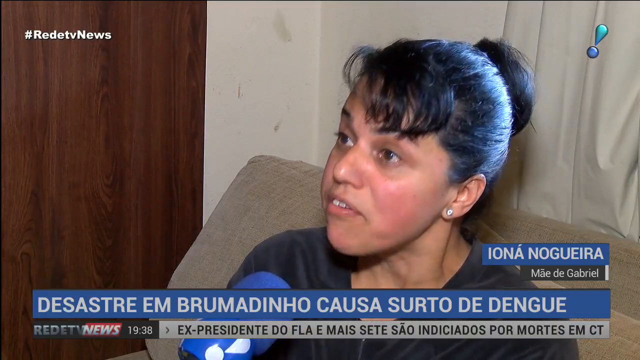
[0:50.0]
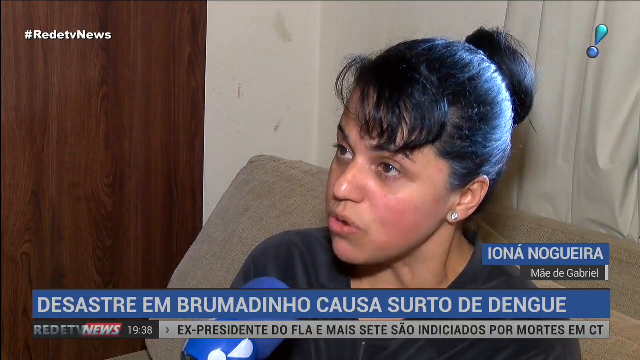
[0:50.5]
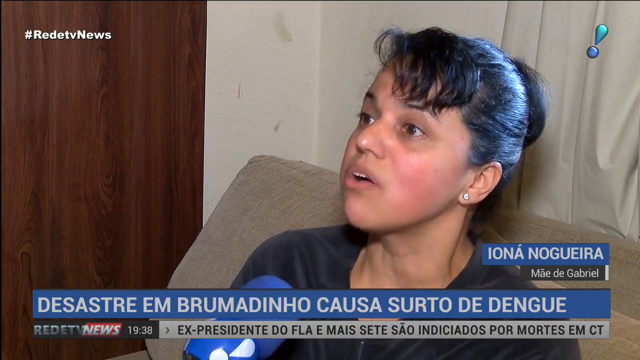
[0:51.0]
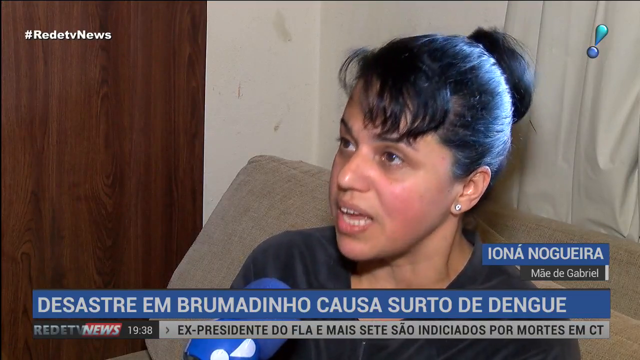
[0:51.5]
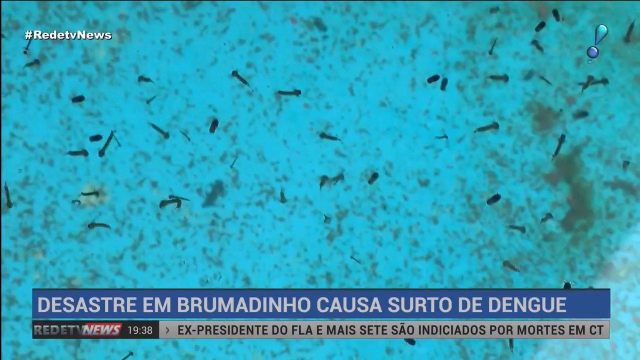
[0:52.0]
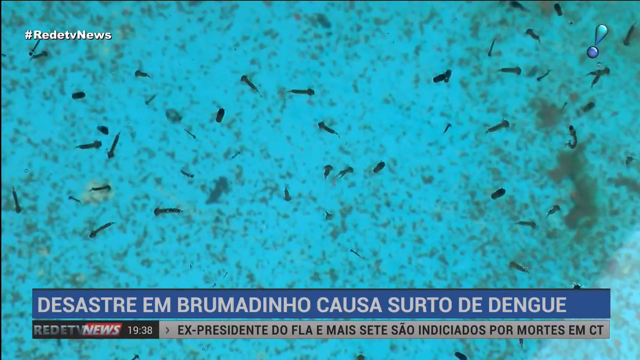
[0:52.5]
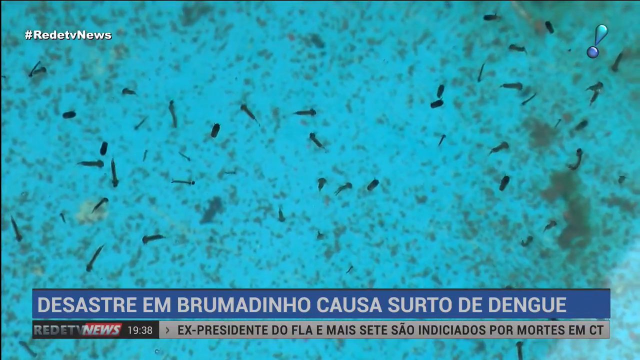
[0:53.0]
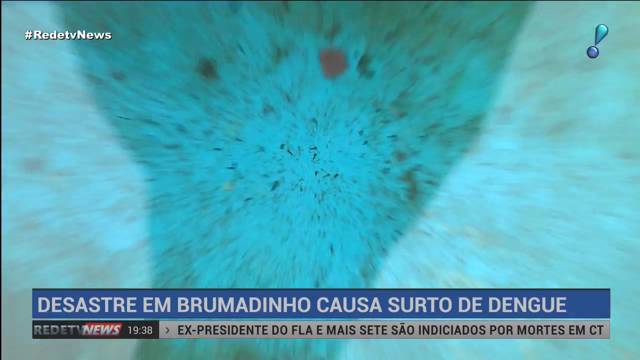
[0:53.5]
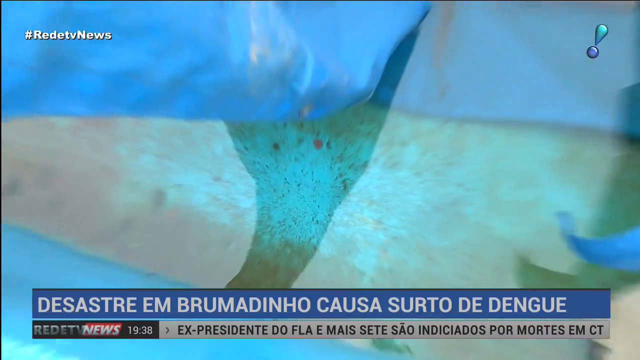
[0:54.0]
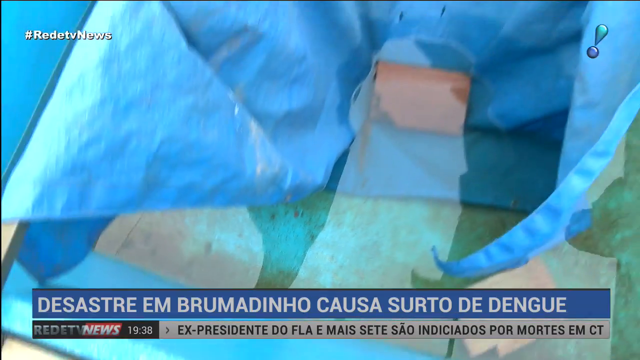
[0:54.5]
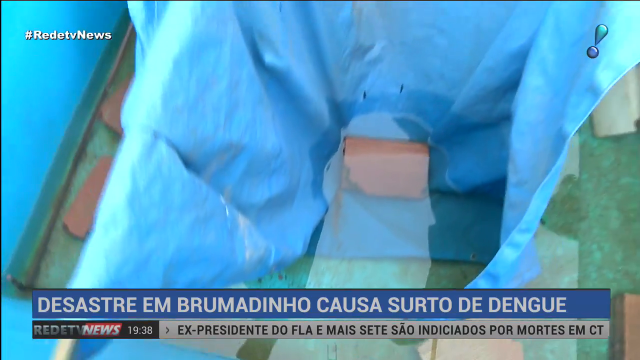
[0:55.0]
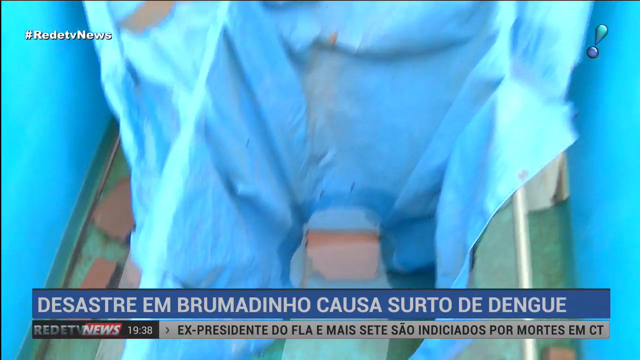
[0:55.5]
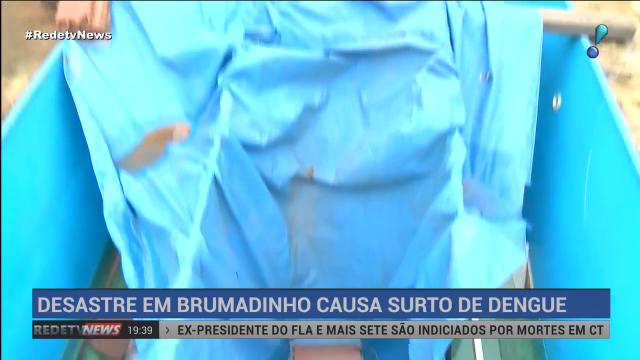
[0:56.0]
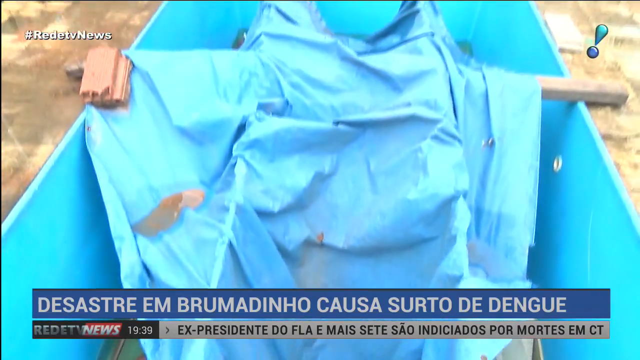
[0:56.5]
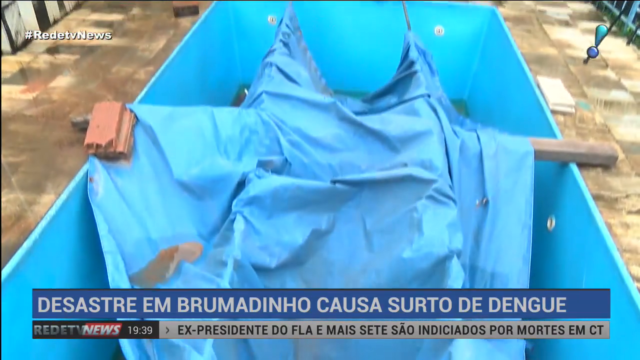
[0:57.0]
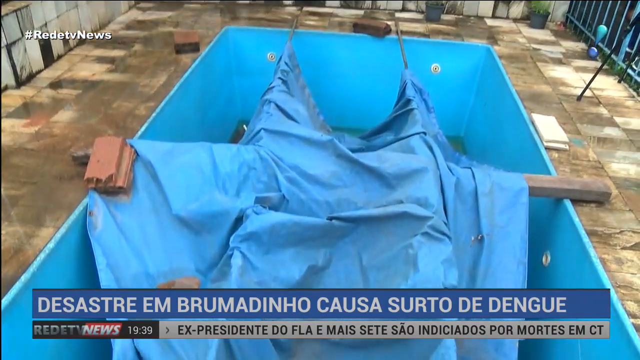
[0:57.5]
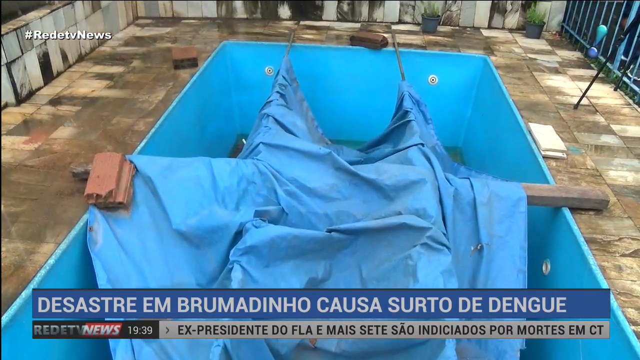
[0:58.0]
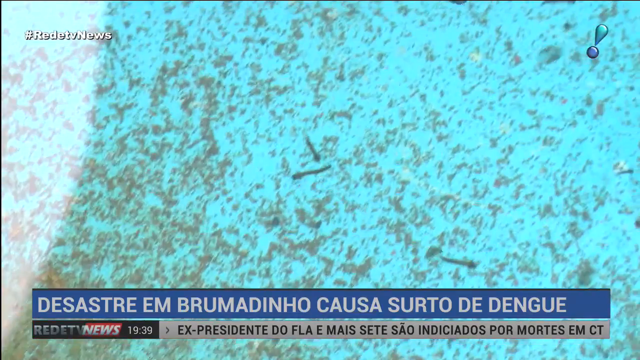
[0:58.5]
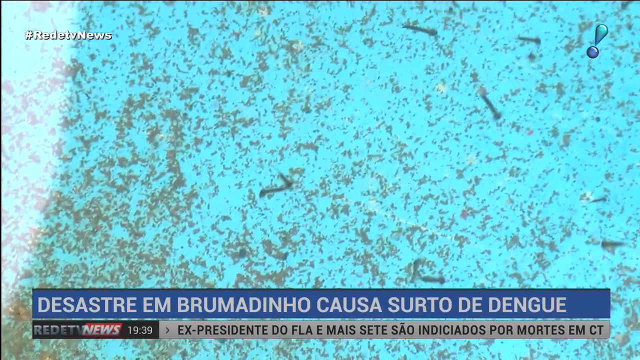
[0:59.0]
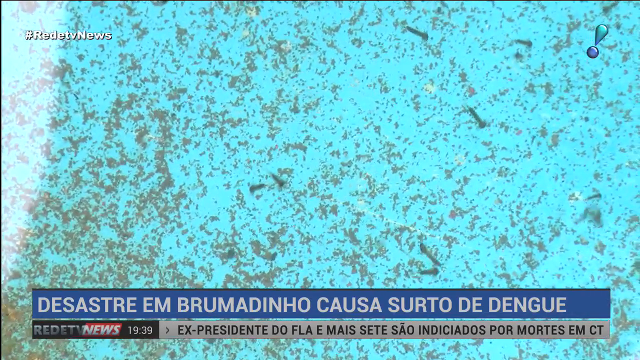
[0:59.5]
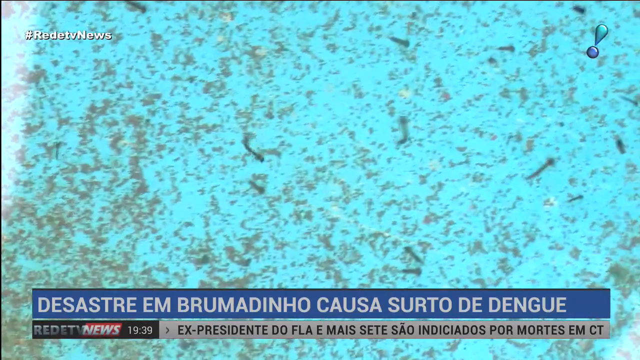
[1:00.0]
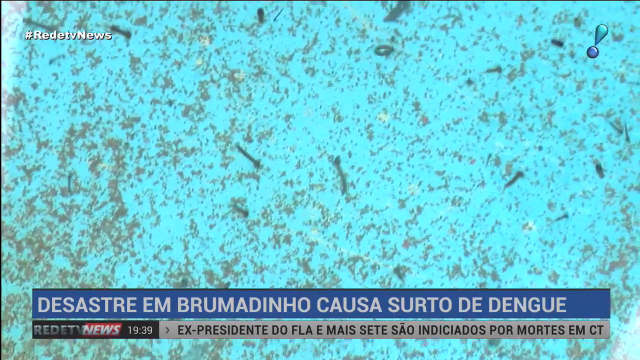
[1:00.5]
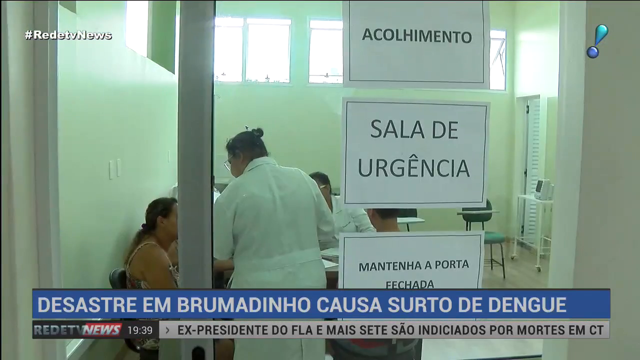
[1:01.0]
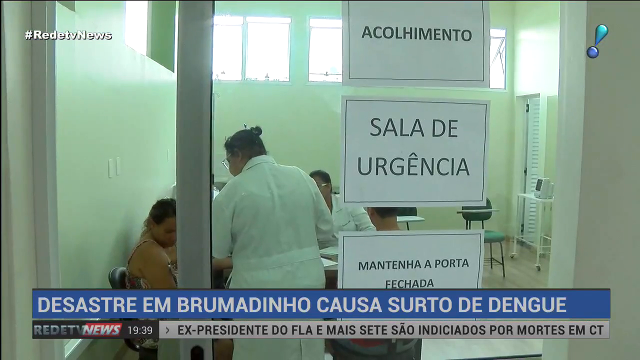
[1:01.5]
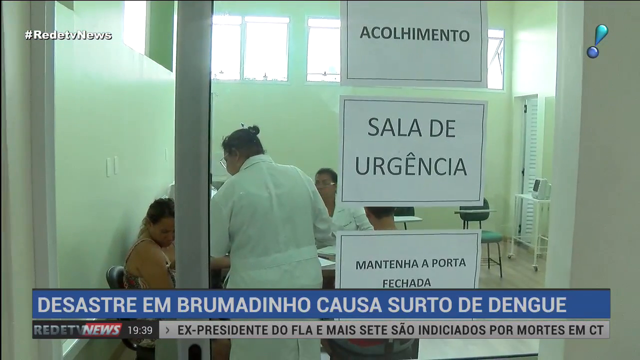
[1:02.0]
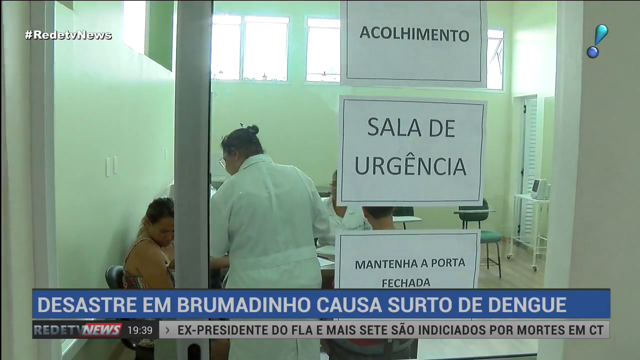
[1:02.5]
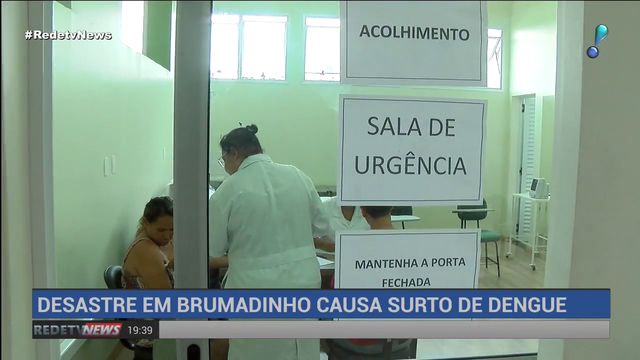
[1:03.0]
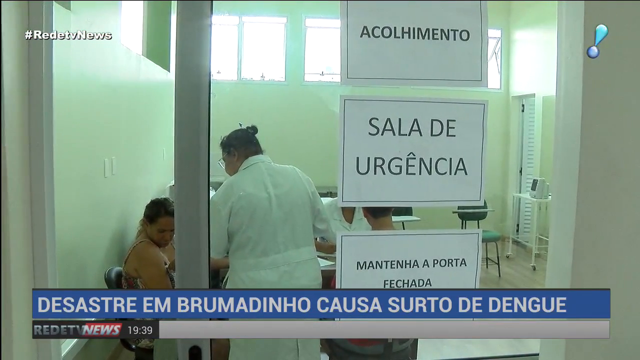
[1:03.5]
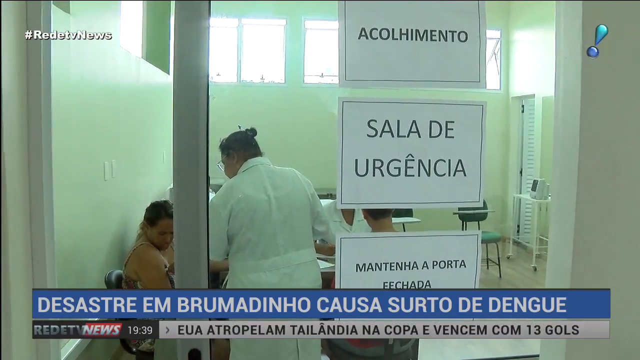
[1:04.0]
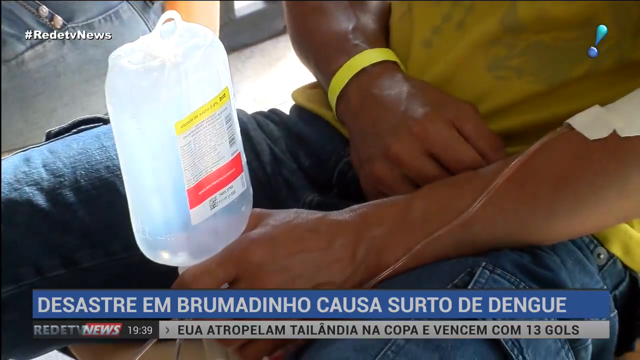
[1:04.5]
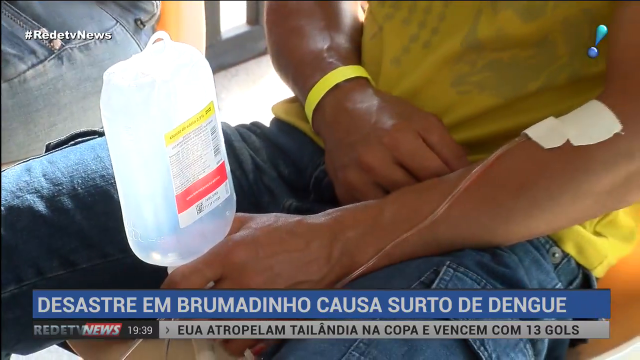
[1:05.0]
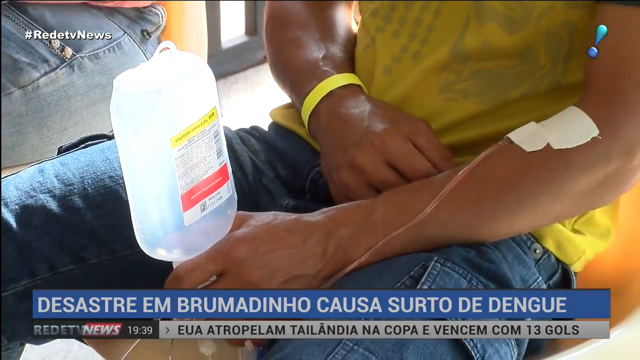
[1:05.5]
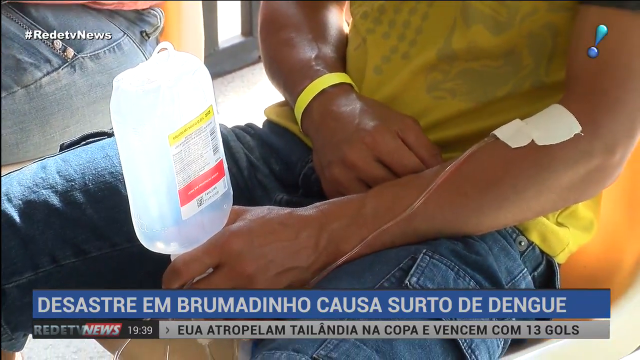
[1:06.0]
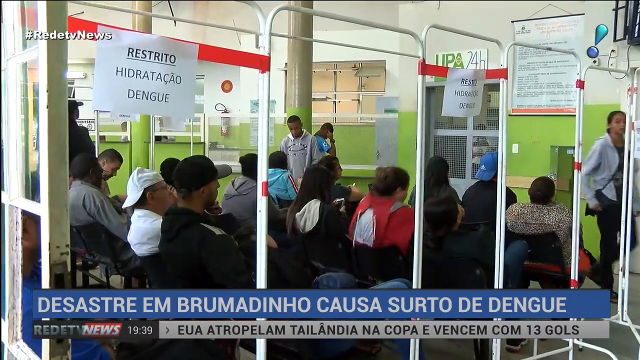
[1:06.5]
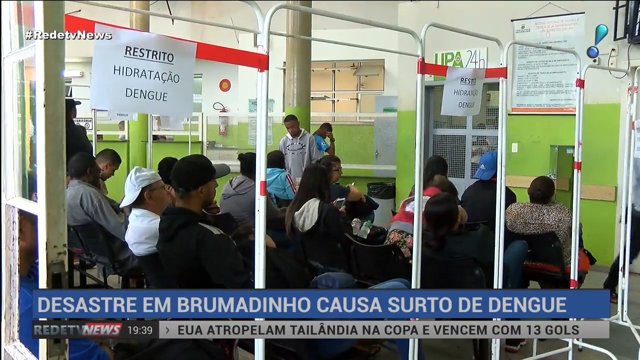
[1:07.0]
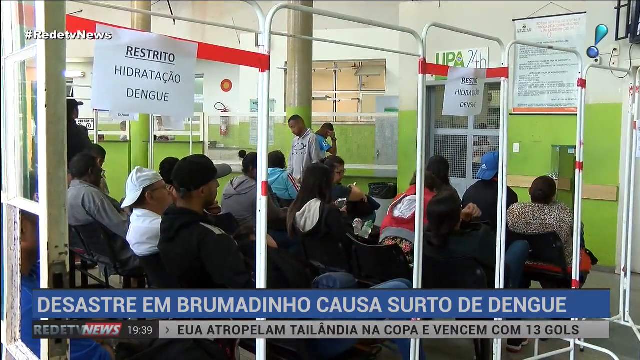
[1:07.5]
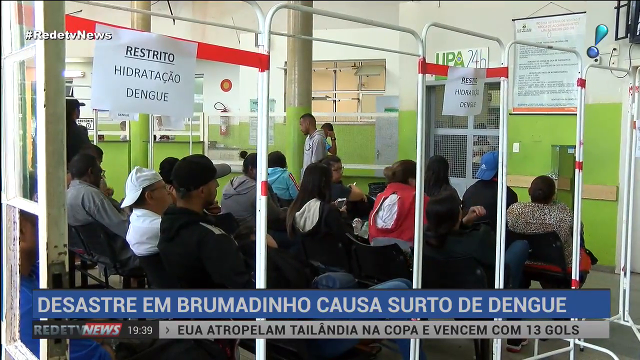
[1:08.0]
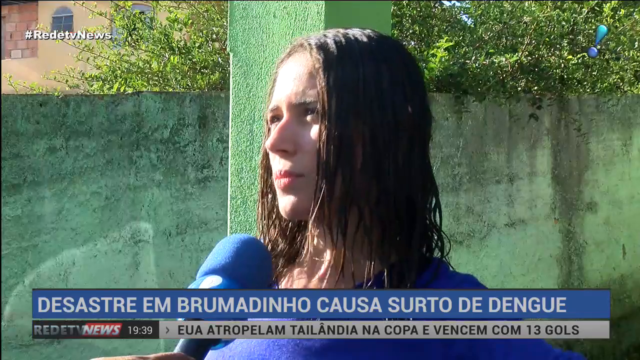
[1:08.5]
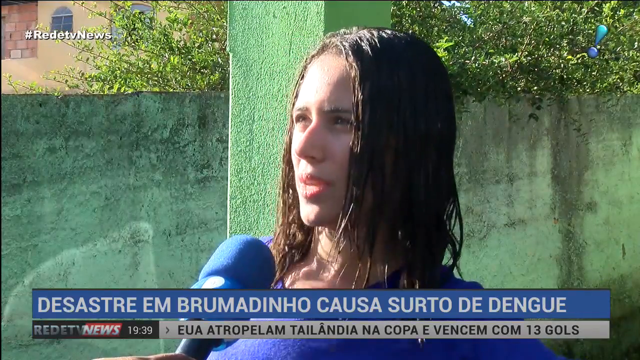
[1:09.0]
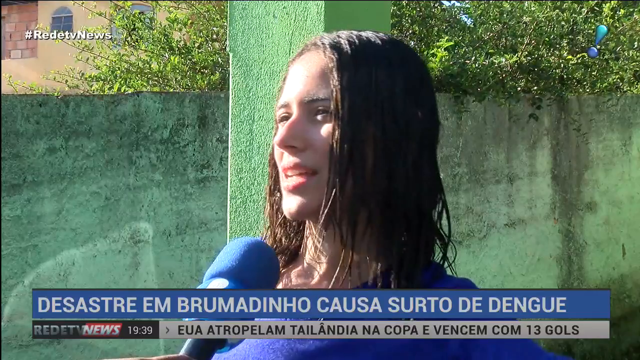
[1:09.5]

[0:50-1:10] The woman on the couch is shown, followed by what looks like a nurse or a doctor in a hospital with some patients. Many people are waiting in line or sitting down, apparently in a hospital. Water with some things floating in it is shown, and what look like little fish float around in it. Someone appears to be holding a bottle of water while having an IV in them. A girl with longer hair is then interviewed outside in the street, with a green background behind her. There is a restricted area where all the people are sitting, with a sign reading "restricted".